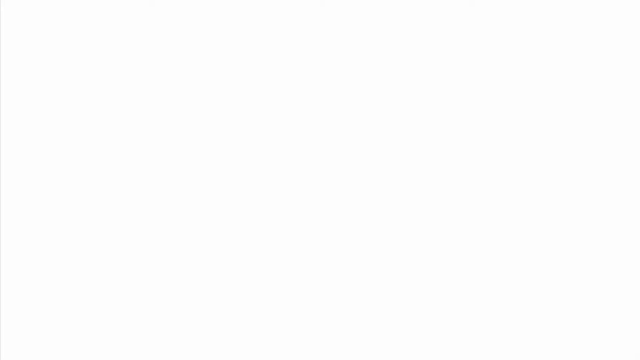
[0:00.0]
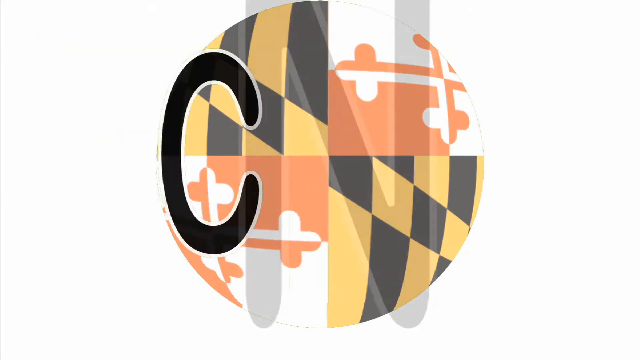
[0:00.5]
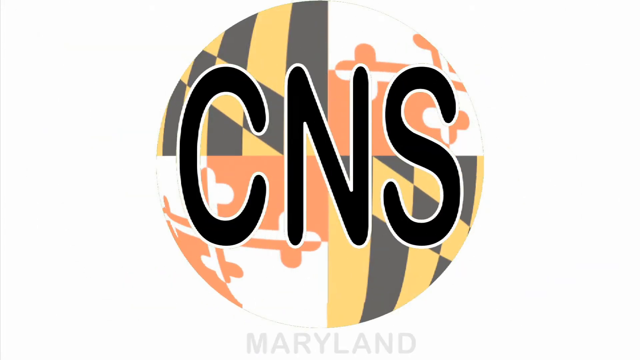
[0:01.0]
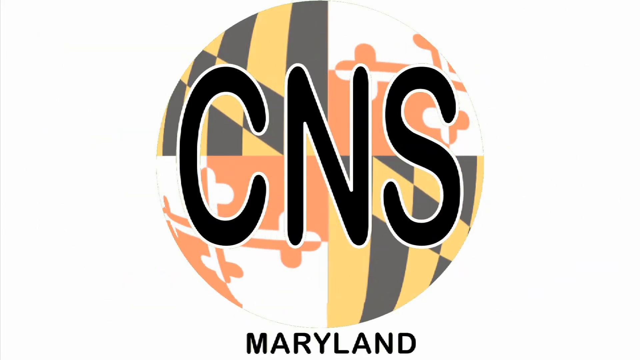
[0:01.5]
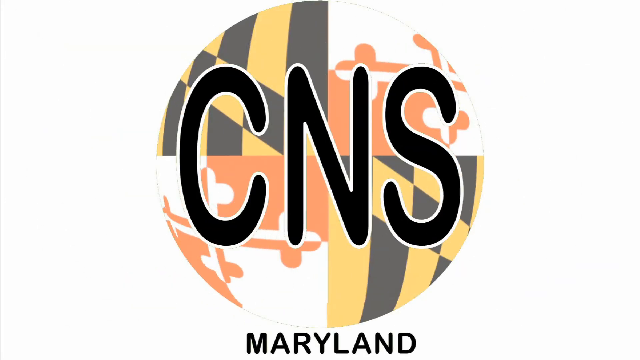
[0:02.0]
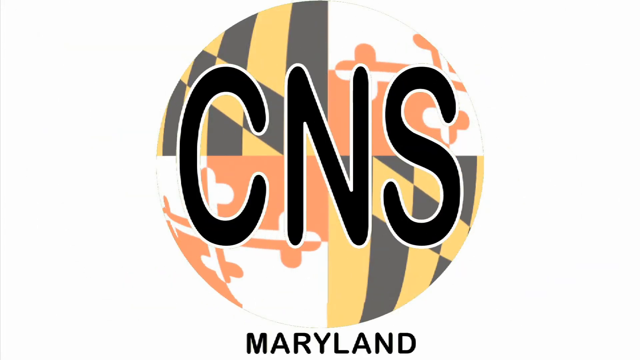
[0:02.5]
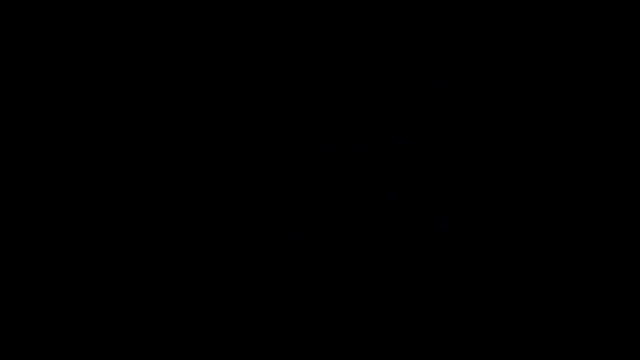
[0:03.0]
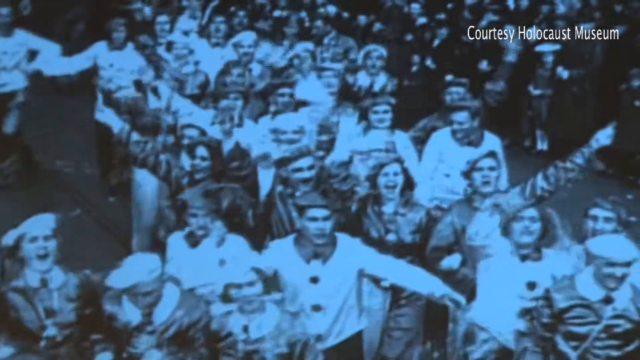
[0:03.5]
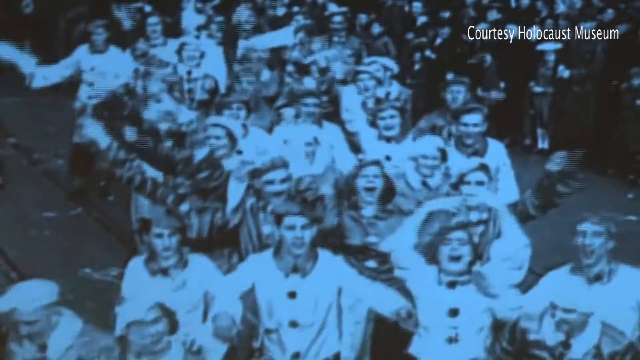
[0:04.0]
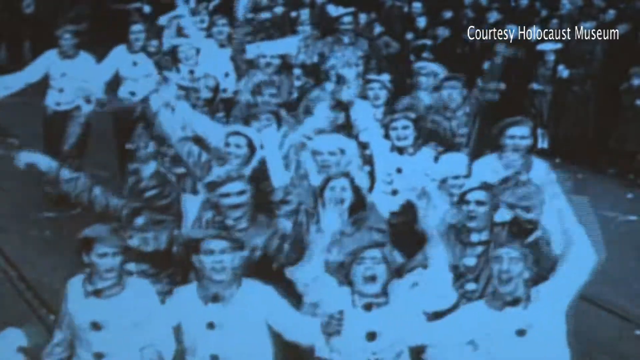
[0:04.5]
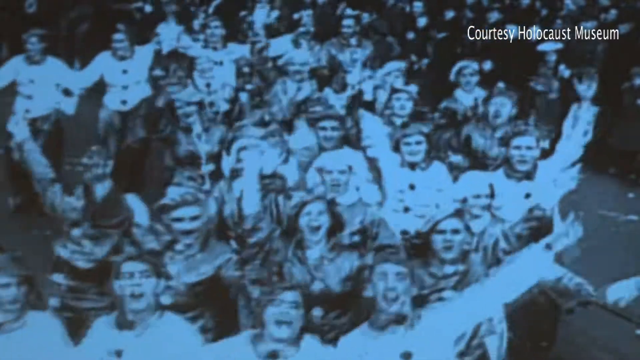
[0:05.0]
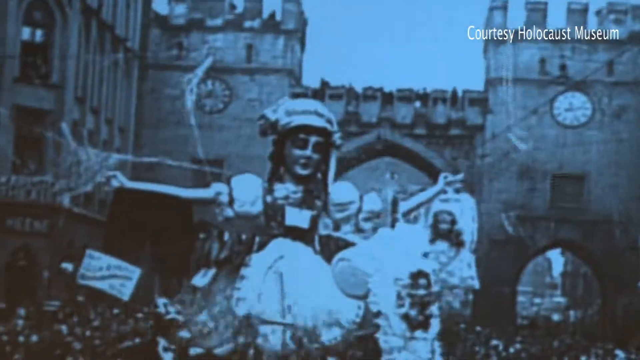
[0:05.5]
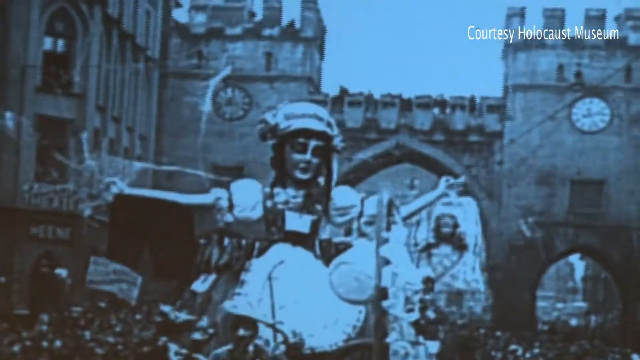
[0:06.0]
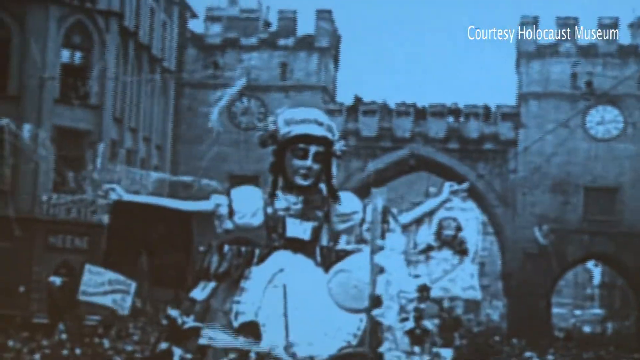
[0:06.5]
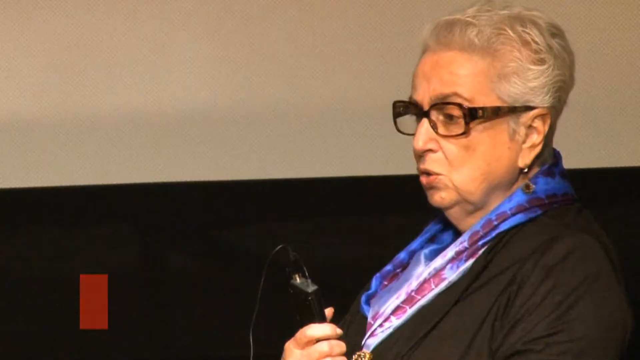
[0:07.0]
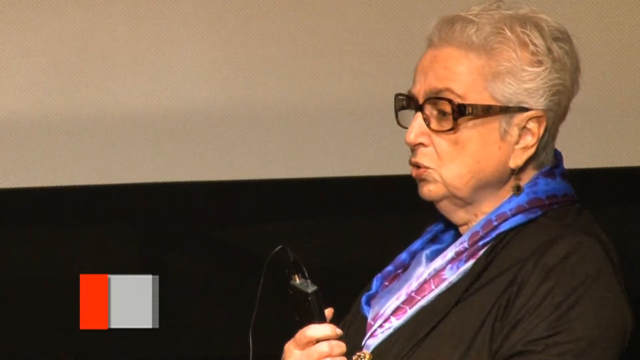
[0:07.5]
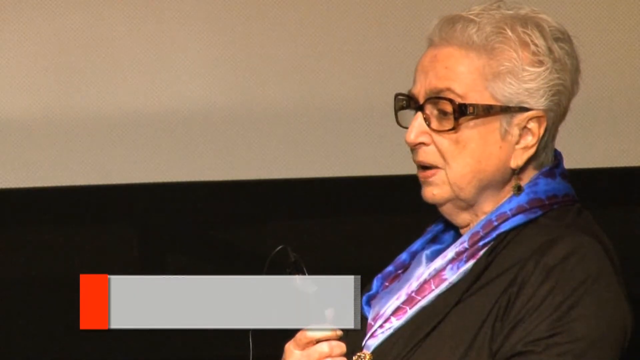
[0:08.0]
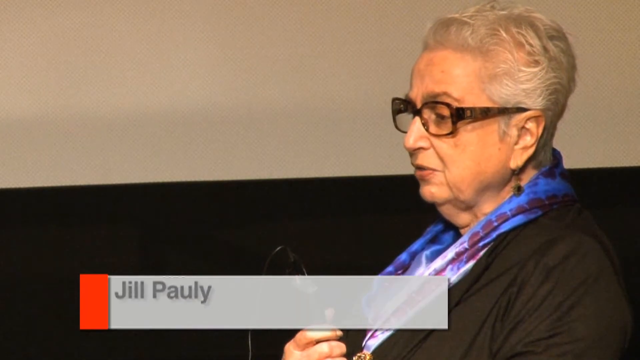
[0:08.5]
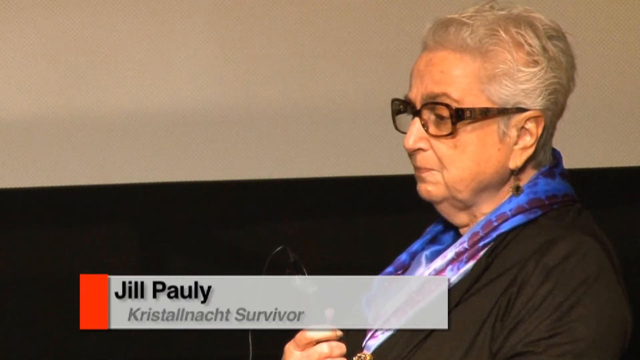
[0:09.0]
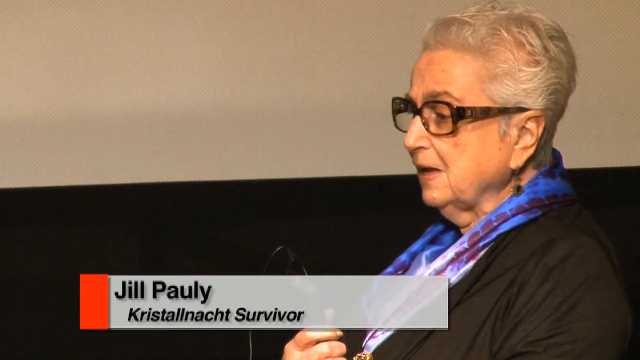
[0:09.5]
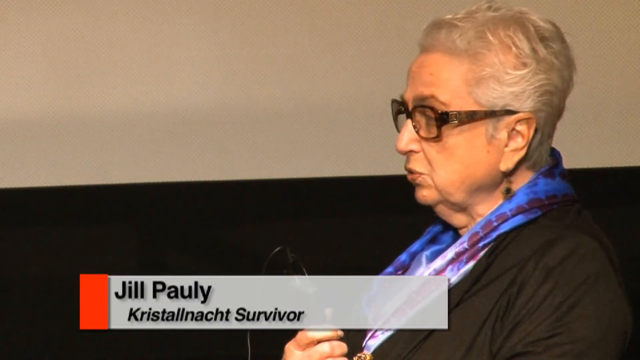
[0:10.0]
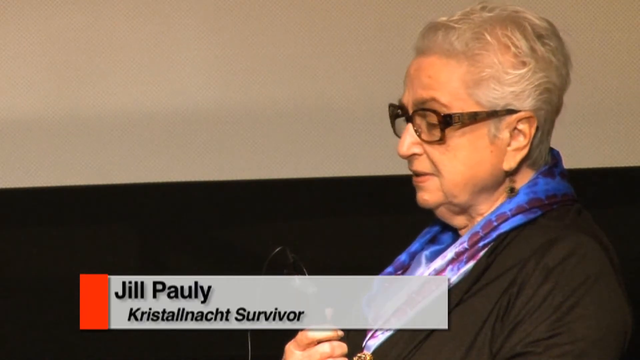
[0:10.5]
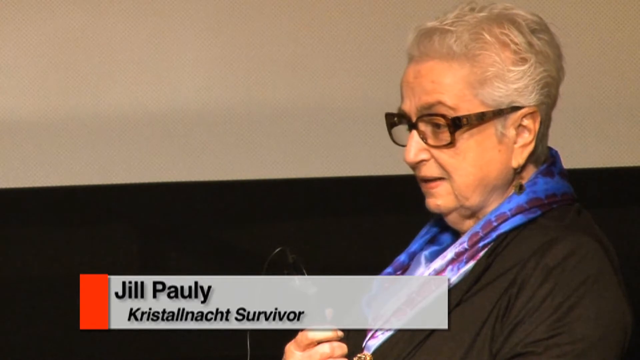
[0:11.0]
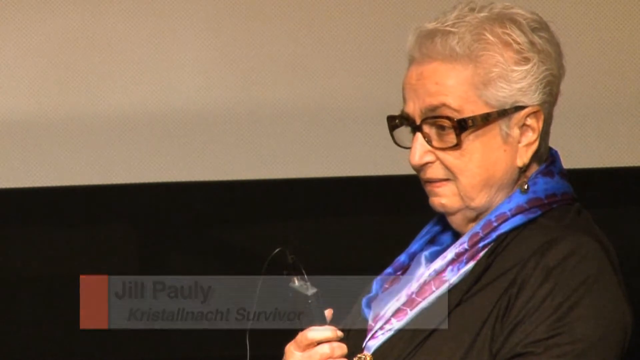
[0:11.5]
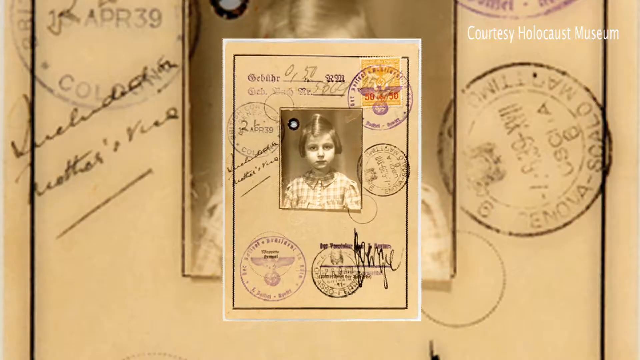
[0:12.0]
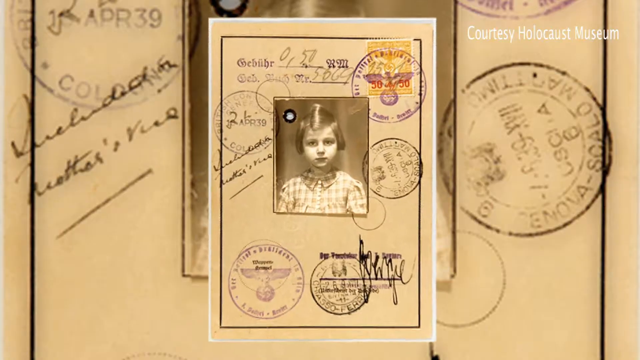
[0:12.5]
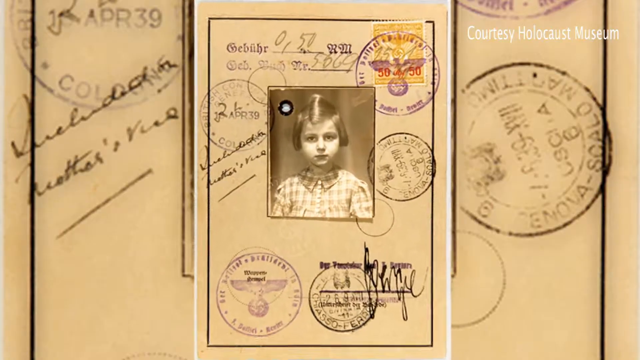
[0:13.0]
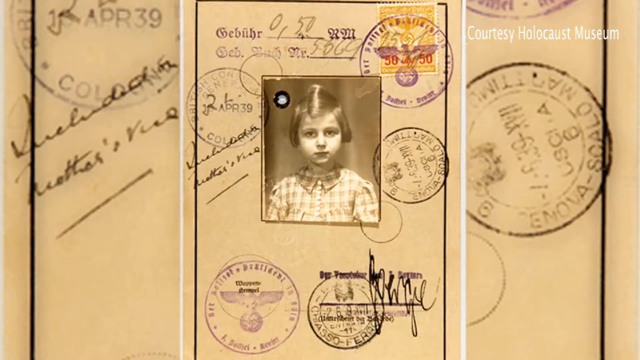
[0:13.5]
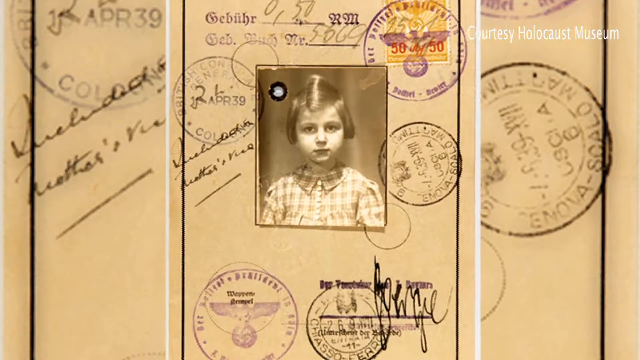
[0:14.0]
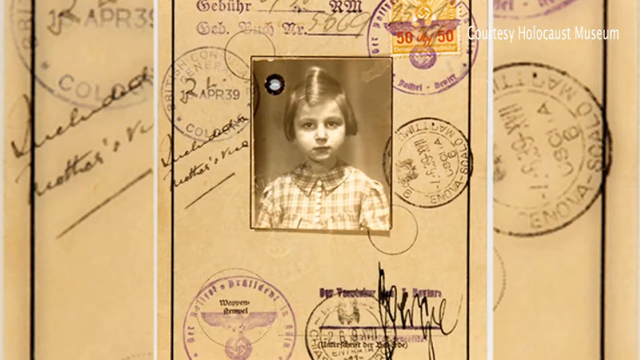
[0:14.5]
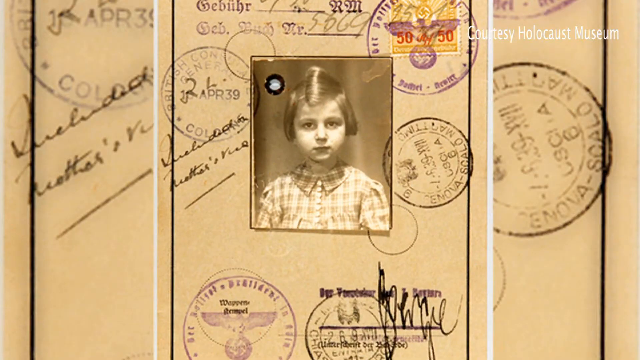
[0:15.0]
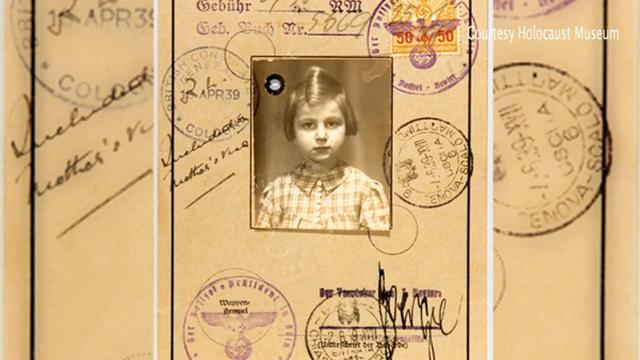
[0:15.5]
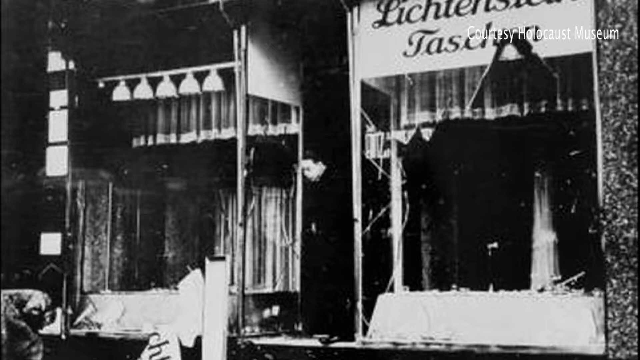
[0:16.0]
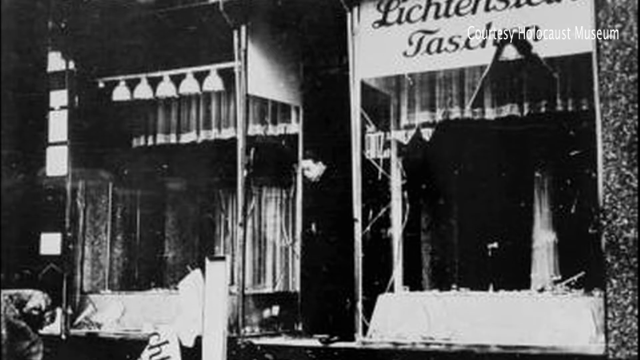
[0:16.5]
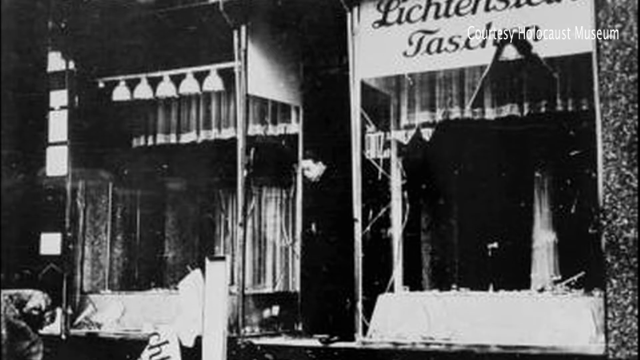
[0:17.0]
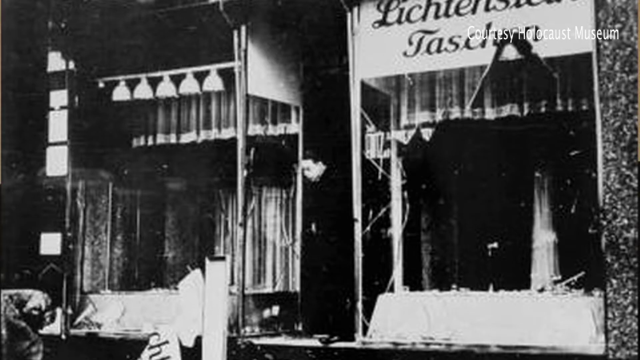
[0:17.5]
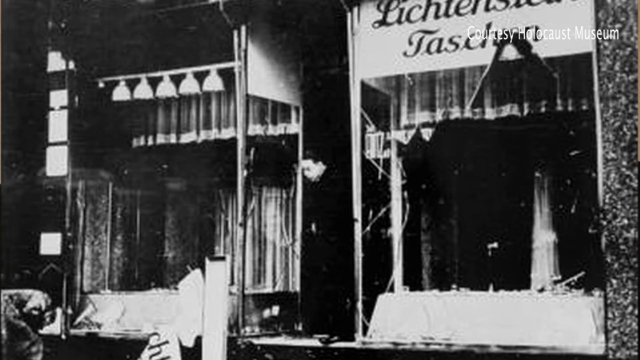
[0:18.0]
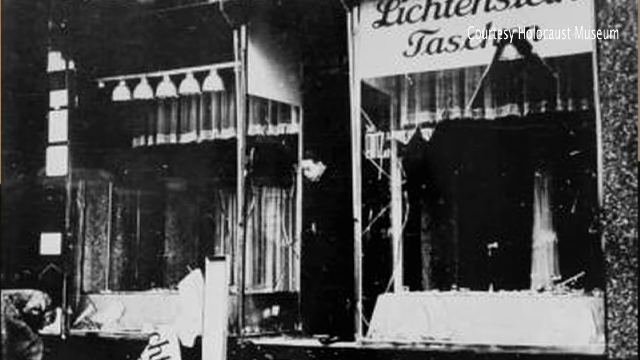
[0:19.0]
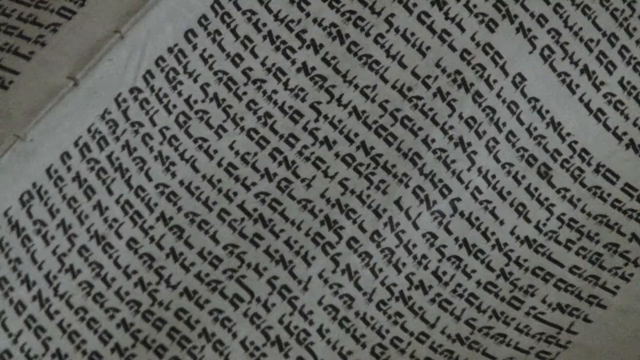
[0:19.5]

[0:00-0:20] Produced by CNS in Maryland, the video shows a picture of many people in the streets at some sort of parade. It shows a picture of Jewel Polly, a Kristallnacht survivor, then cuts to a picture of her as a young girl. It shows the storefronts of Jewish-owned businesses, then Hebrew writing that is part of the Talmud. Jewel Polly, now an elderly woman, is shown speaking; it appears to be an interview about her time during the Holocaust, possibly about Kristallnacht.